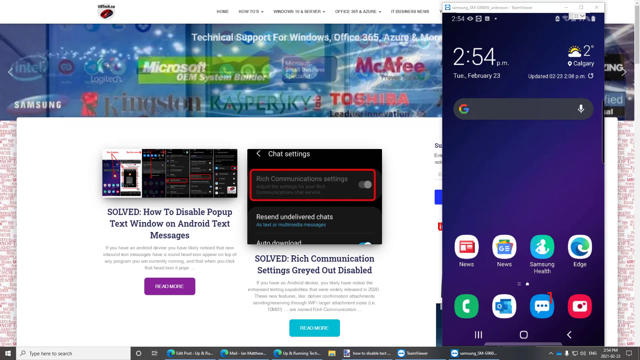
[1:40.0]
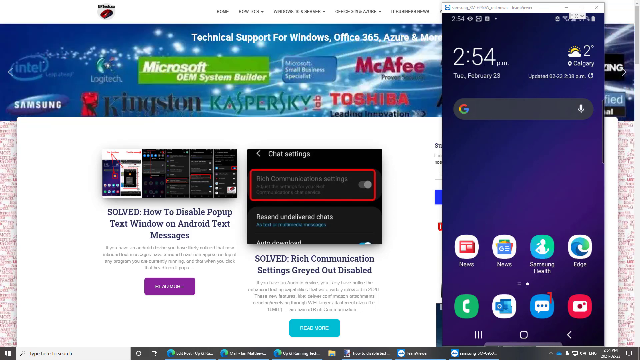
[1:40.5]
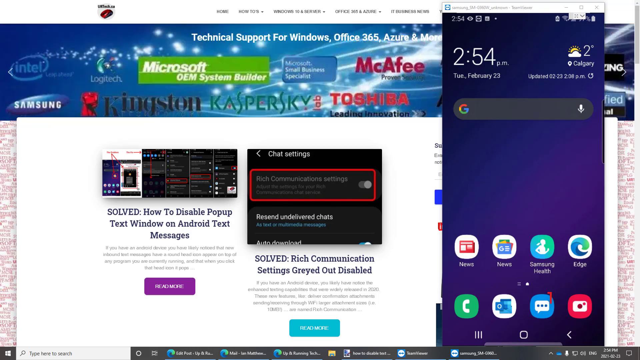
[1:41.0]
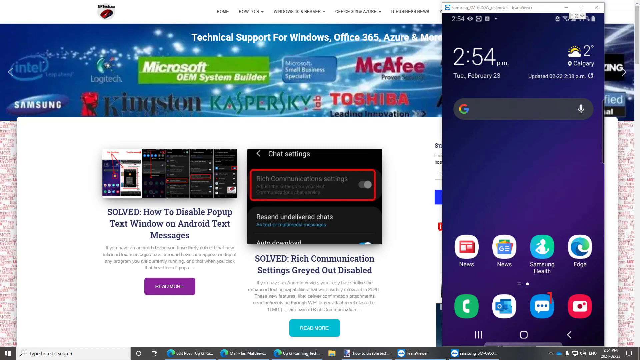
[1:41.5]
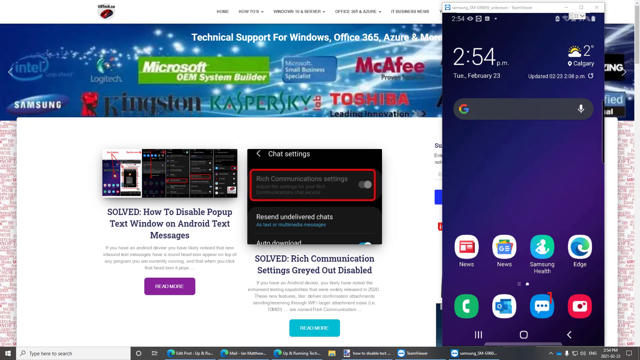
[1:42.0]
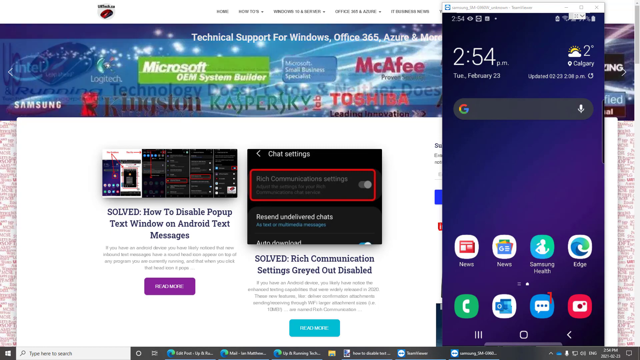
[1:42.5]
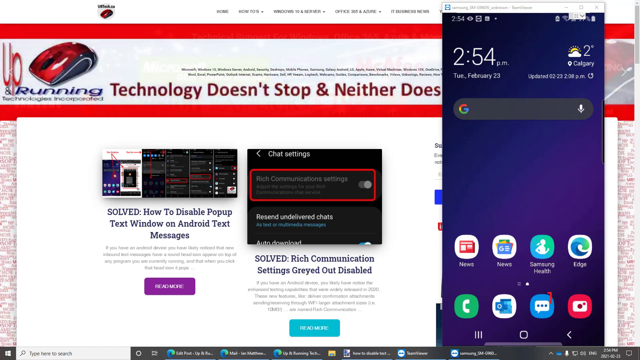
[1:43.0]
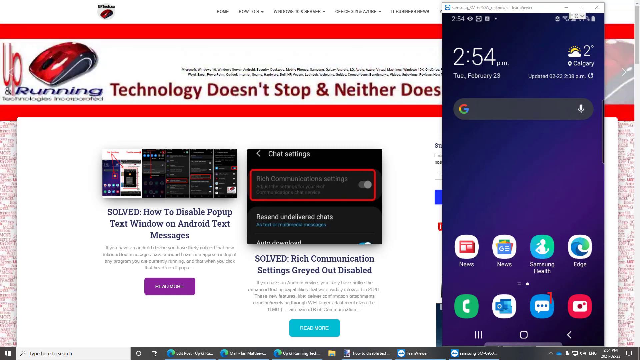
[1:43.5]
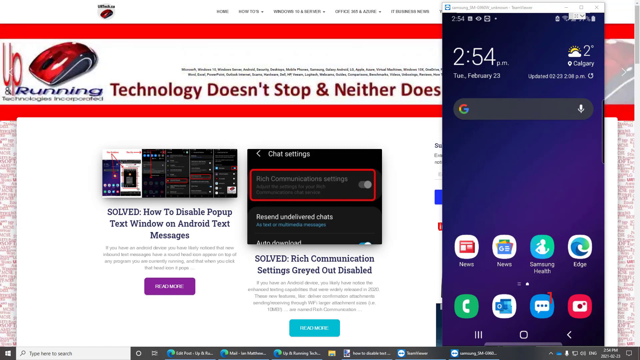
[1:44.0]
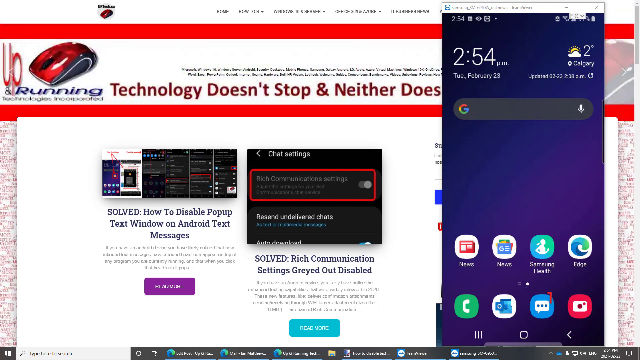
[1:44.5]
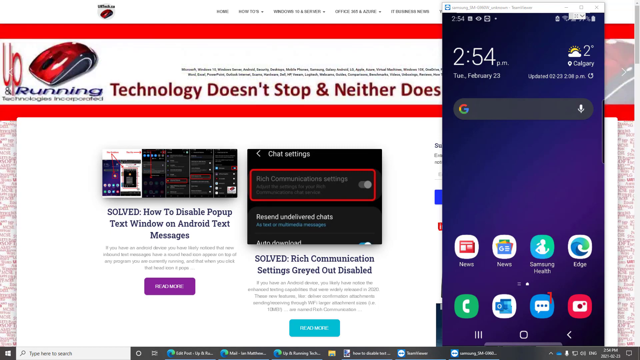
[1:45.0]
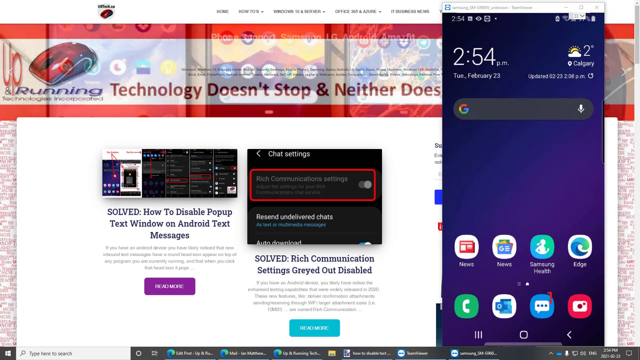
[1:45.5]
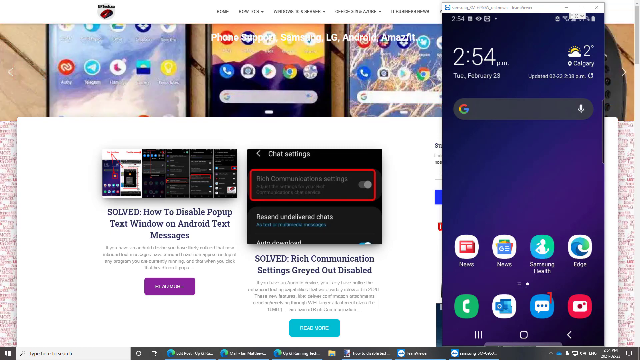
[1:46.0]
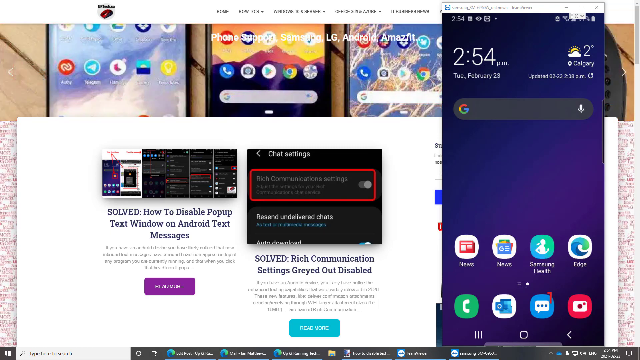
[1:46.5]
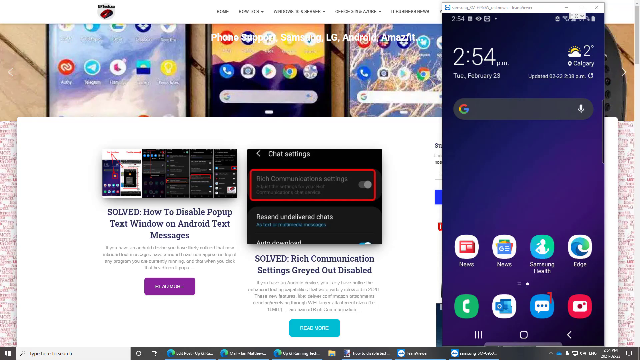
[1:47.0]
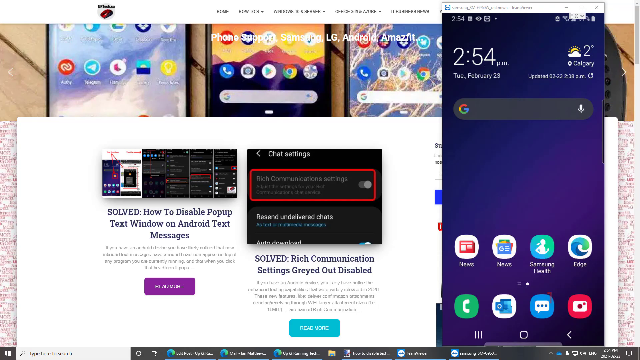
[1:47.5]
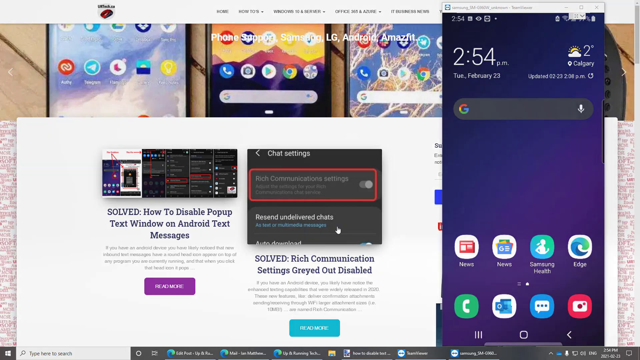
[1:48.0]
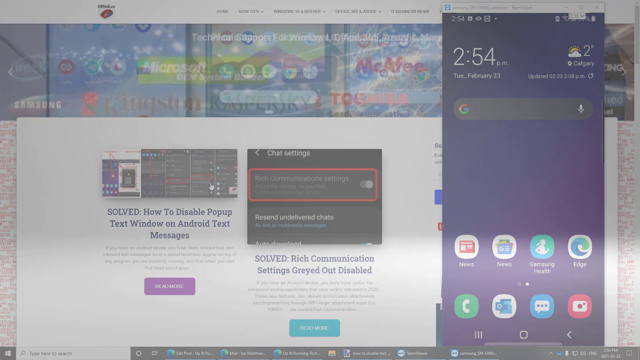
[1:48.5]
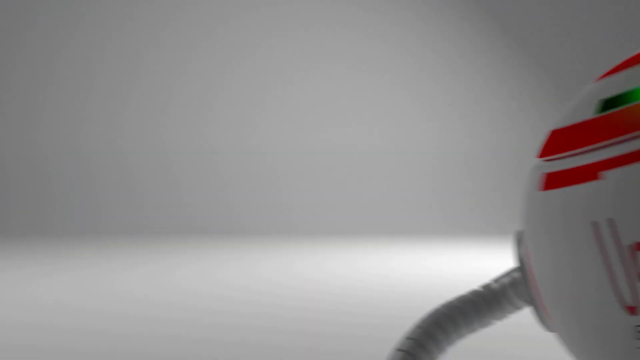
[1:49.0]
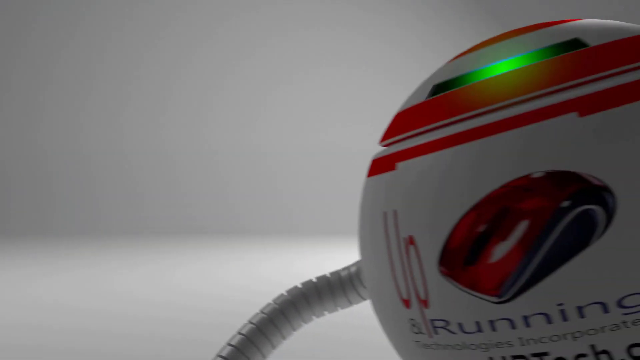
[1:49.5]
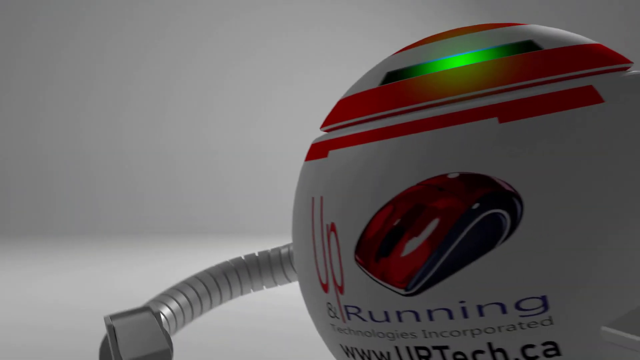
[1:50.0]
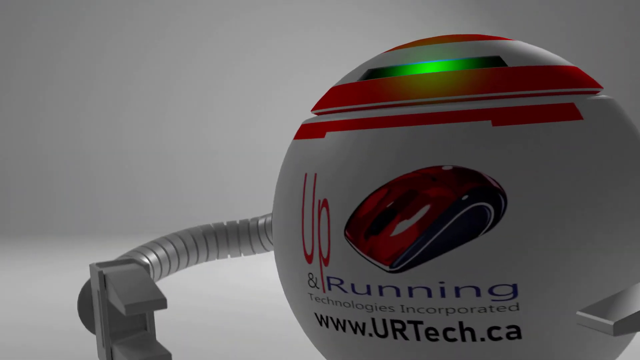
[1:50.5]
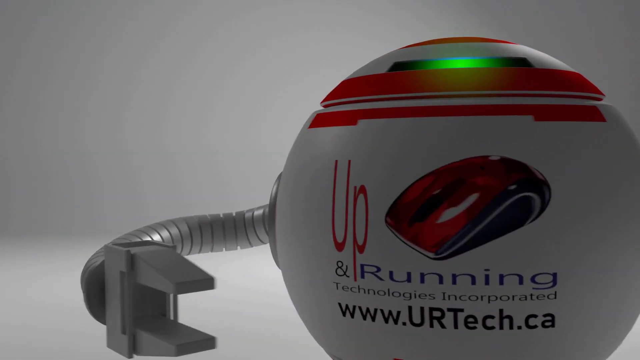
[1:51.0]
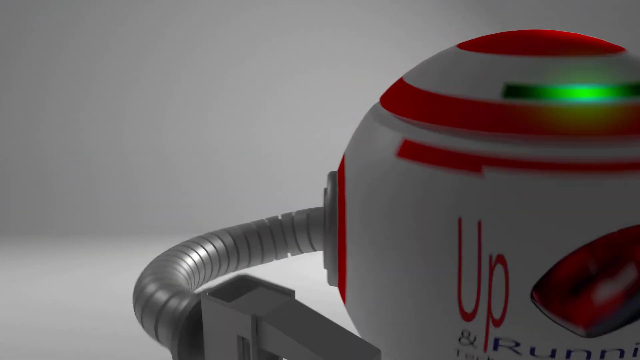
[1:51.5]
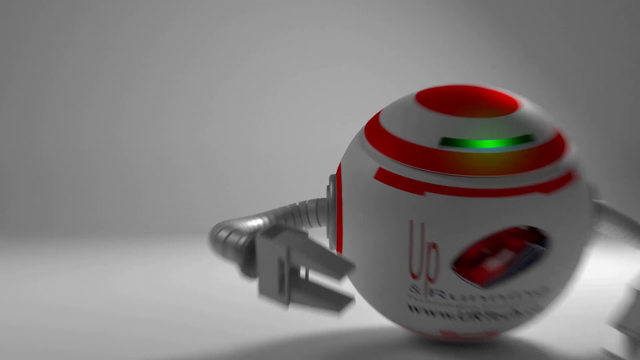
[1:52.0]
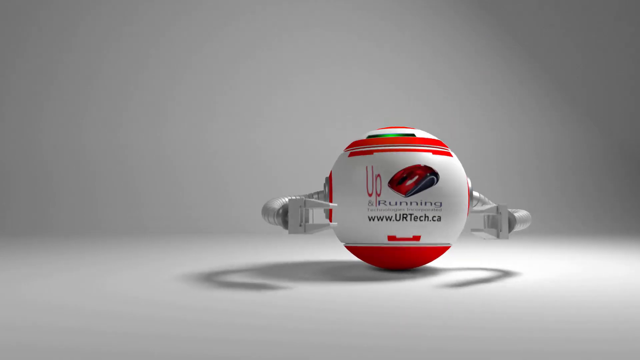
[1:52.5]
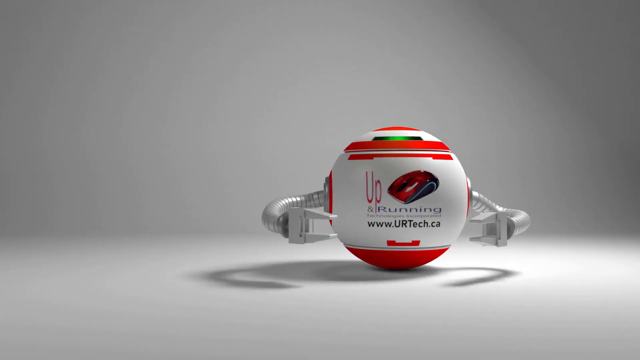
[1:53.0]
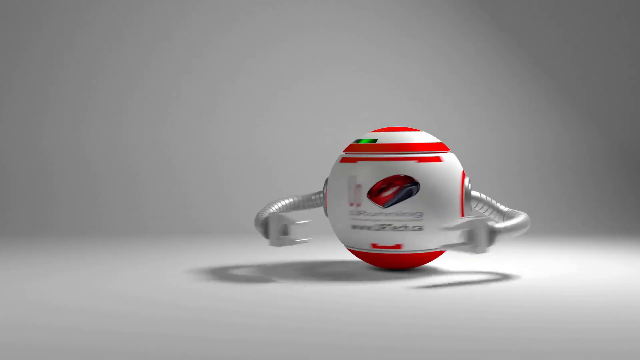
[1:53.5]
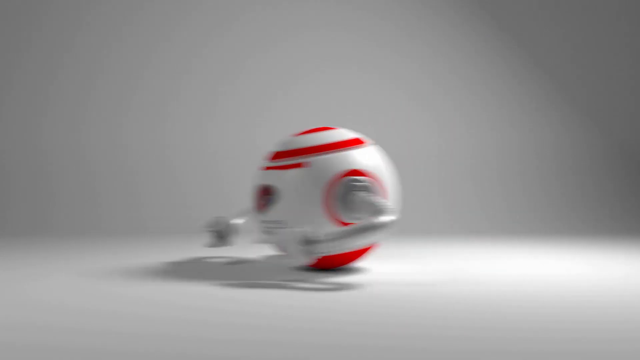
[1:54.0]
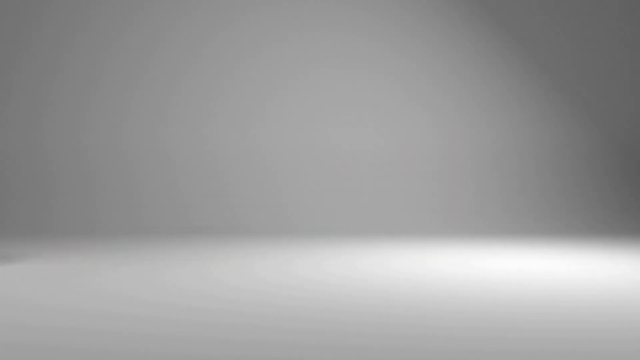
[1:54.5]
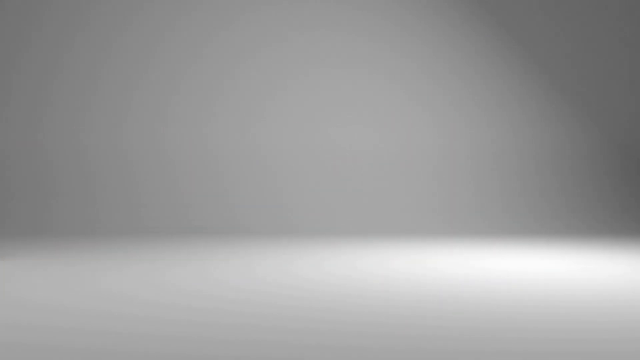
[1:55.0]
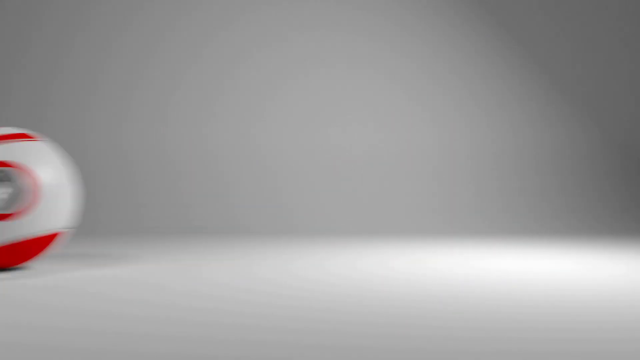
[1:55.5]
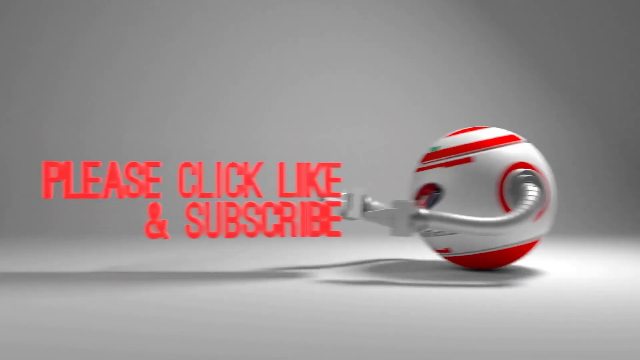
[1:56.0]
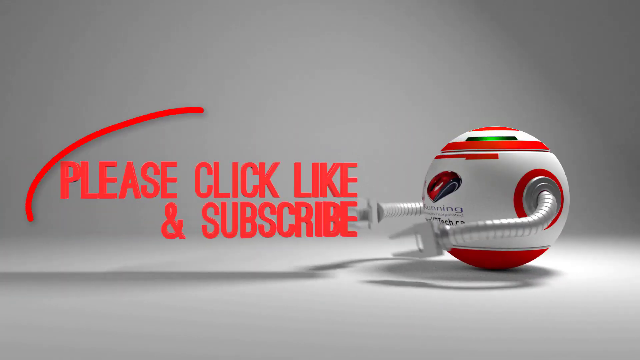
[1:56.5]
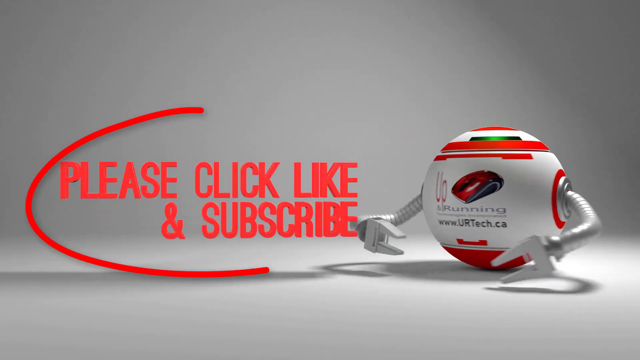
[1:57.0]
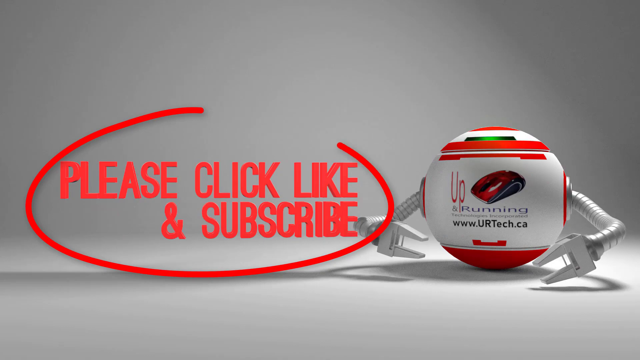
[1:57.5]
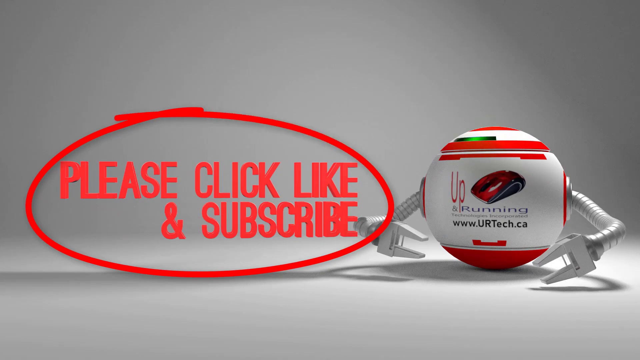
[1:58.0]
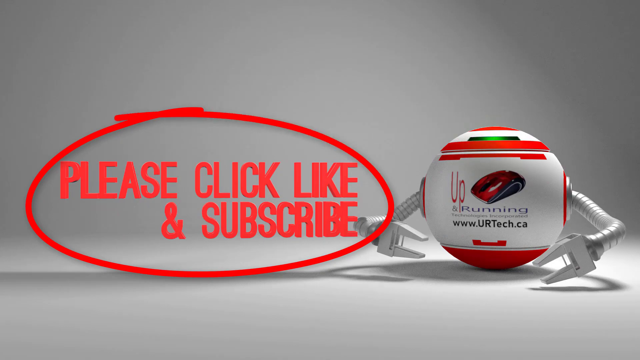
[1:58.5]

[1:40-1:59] The IT help video continues, showing how to change a setting on a smartphone. The main background is a Windows 10 computer desktop with an Edge browser open to urtech.ca, an IT help company website. In the middle of the screen is an article titled "Solved. Rich communication settings grayed out, disabled," which appears to be the problem the video is solving. To its right is a screen share of a separate Samsung Android smartphone showing its home screen, with a mark reading 1 next to the message icon at the bottom. Nothing else happens until the video quickly cuts to an ad for URtech: a CG clip of a robotic ball with two tentacle clamp arms rolling to the screen, asking the viewer to like and subscribe. The video is probably made by the URtech company.